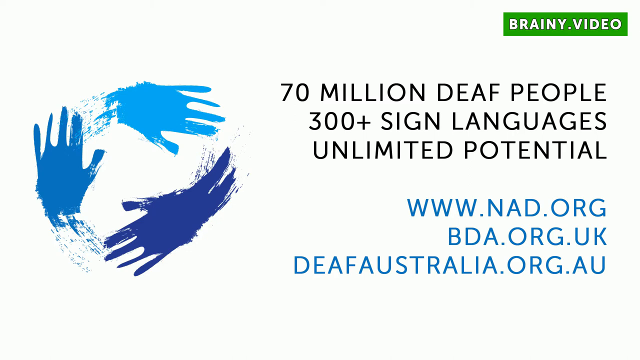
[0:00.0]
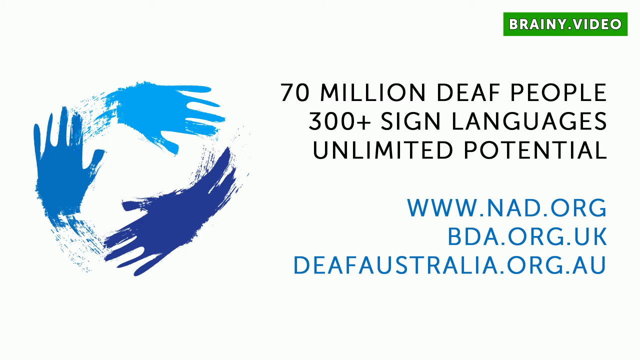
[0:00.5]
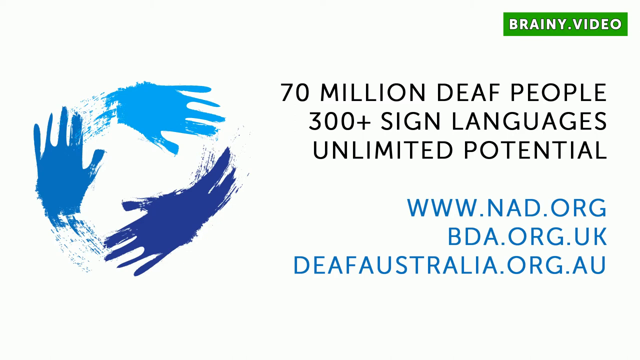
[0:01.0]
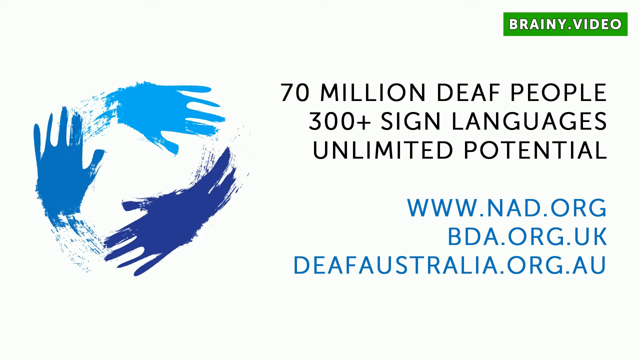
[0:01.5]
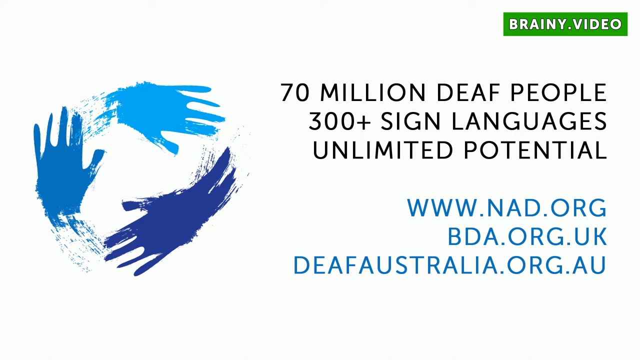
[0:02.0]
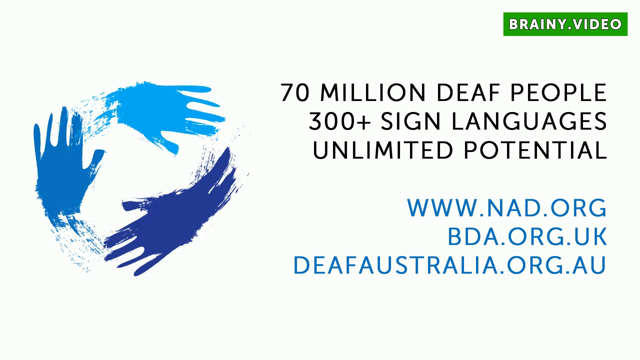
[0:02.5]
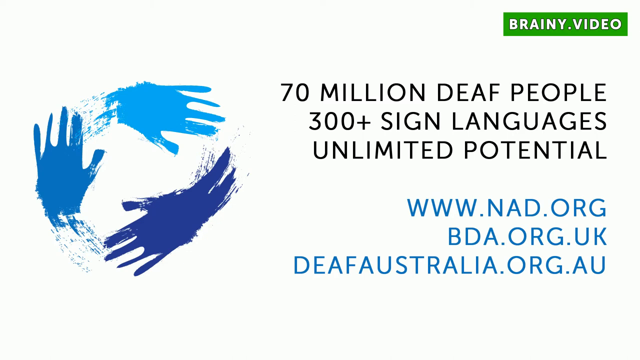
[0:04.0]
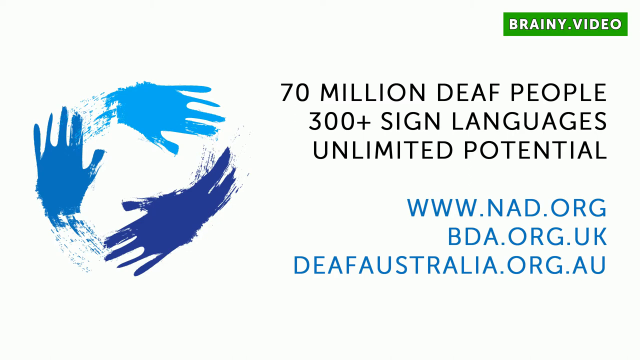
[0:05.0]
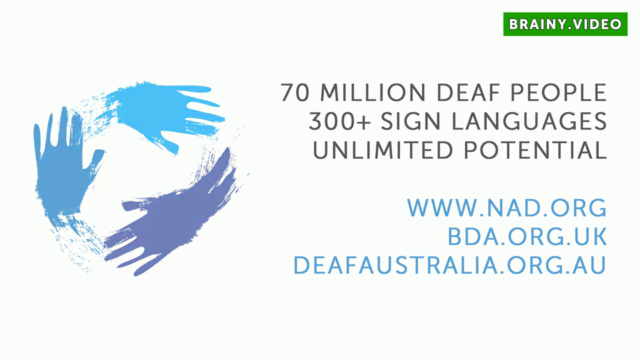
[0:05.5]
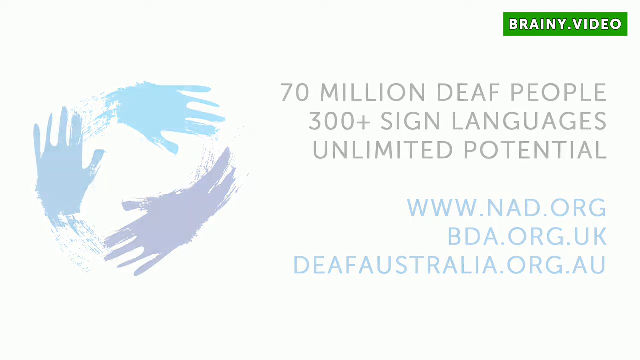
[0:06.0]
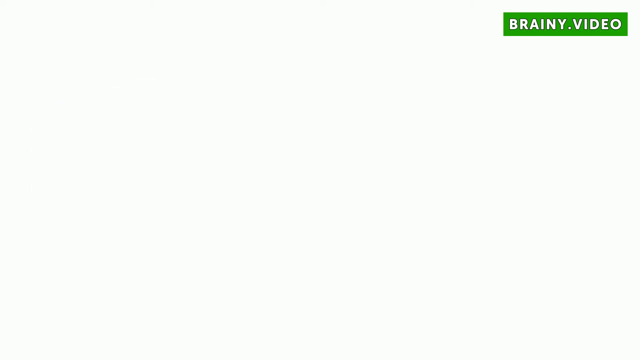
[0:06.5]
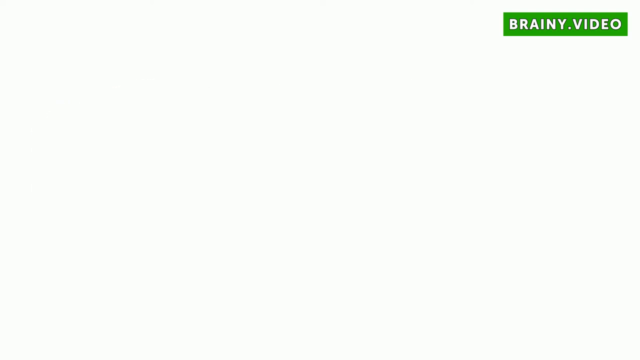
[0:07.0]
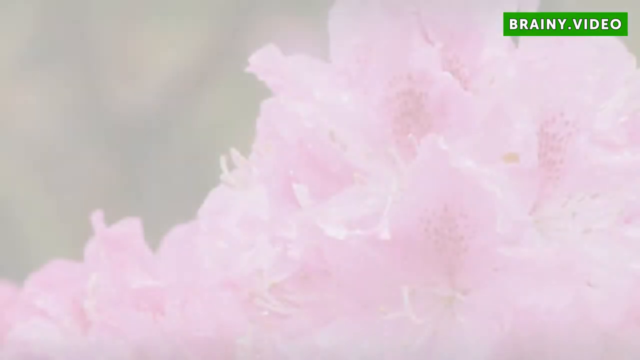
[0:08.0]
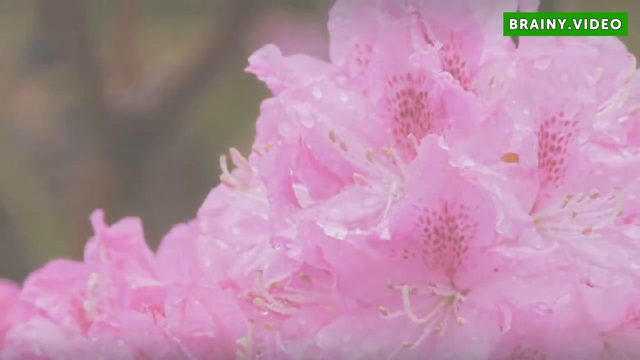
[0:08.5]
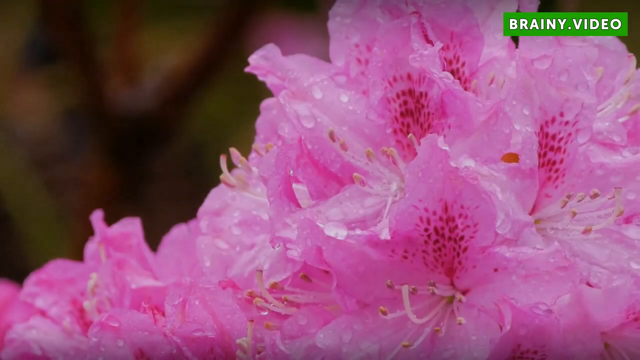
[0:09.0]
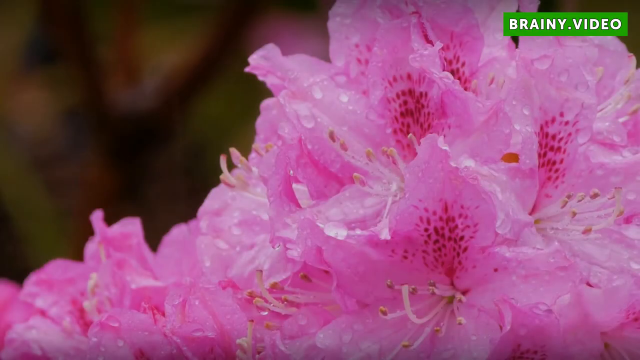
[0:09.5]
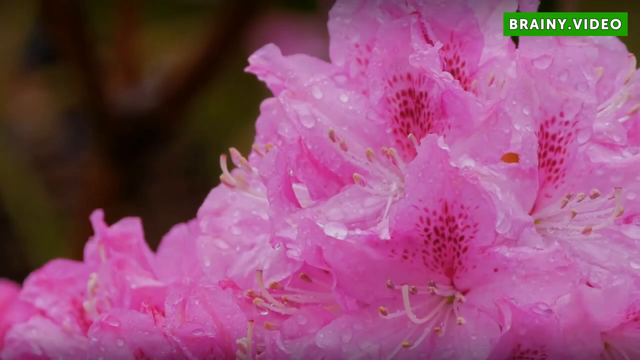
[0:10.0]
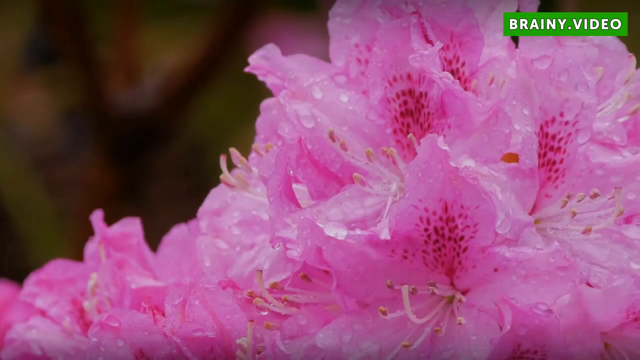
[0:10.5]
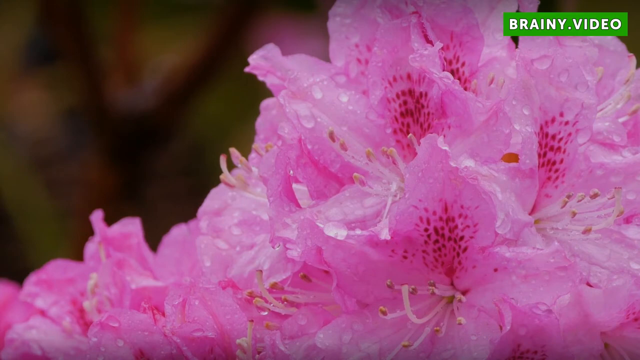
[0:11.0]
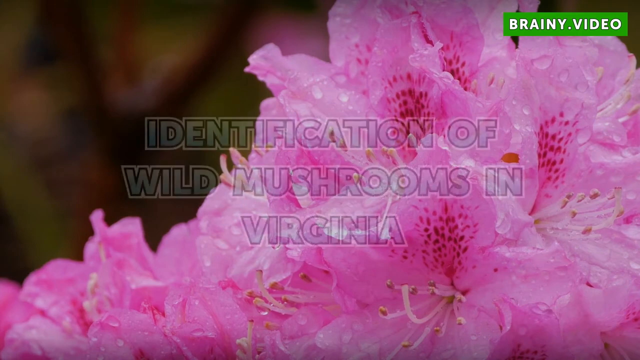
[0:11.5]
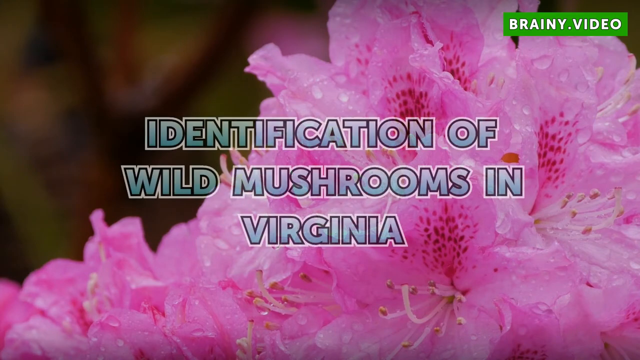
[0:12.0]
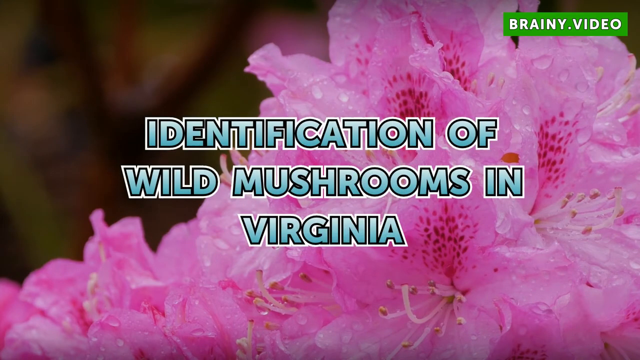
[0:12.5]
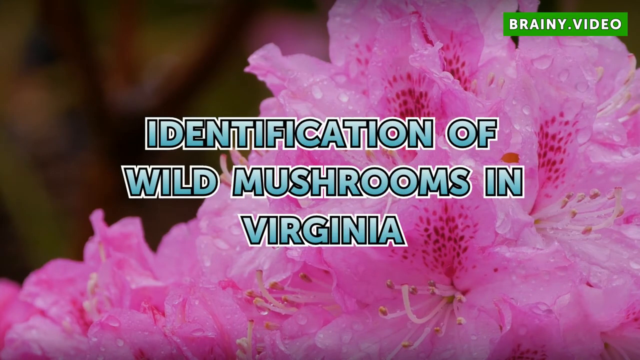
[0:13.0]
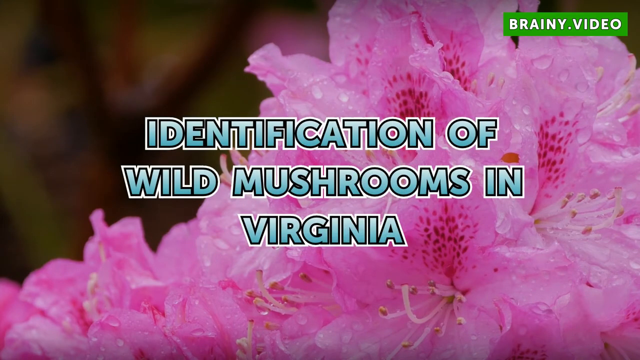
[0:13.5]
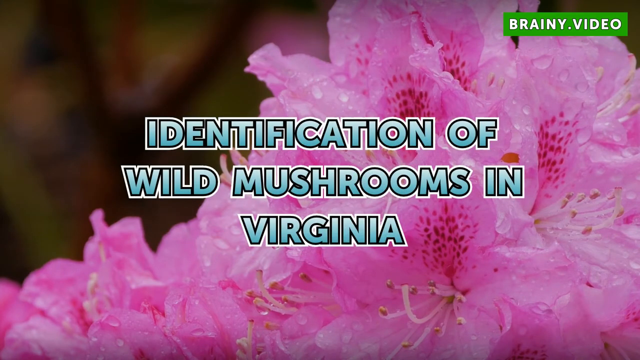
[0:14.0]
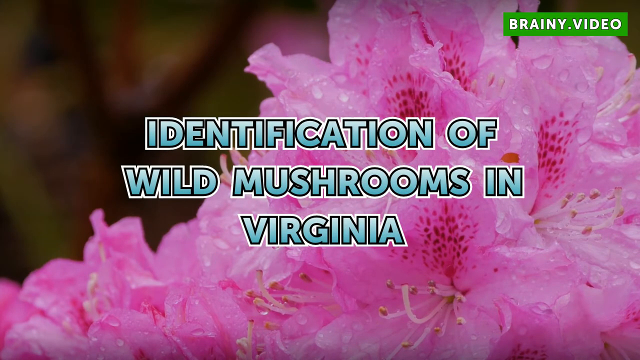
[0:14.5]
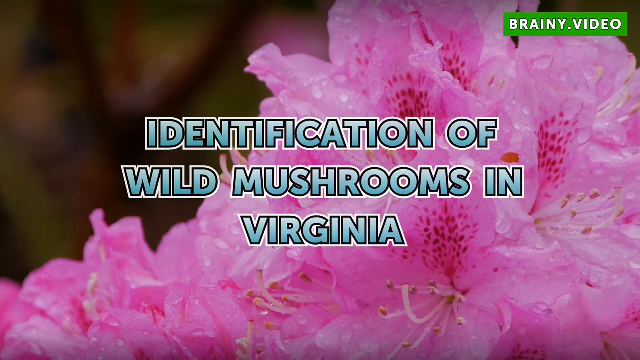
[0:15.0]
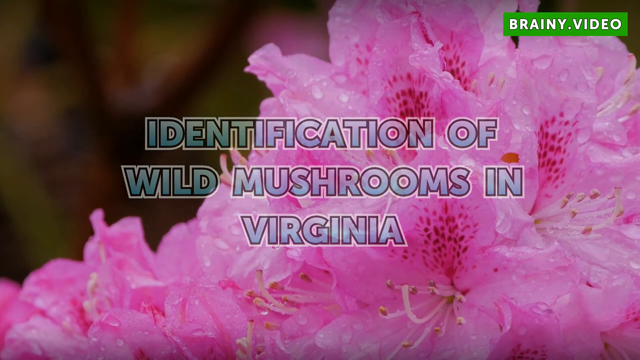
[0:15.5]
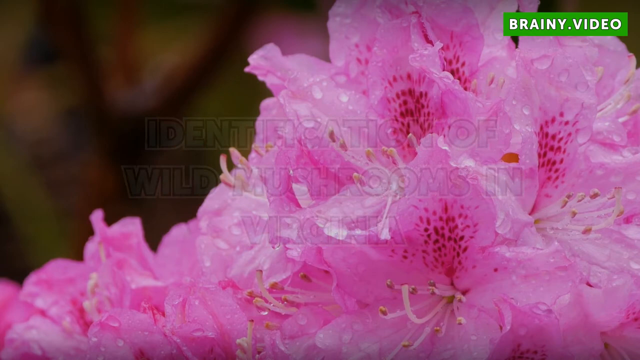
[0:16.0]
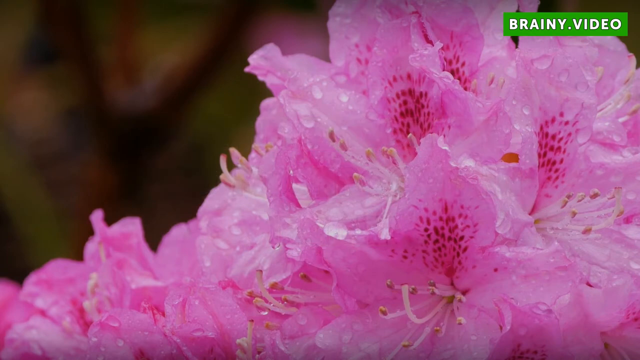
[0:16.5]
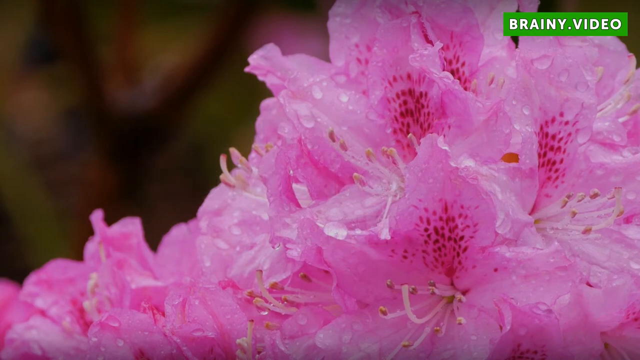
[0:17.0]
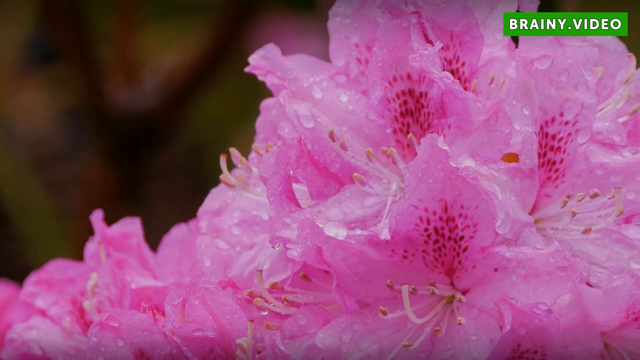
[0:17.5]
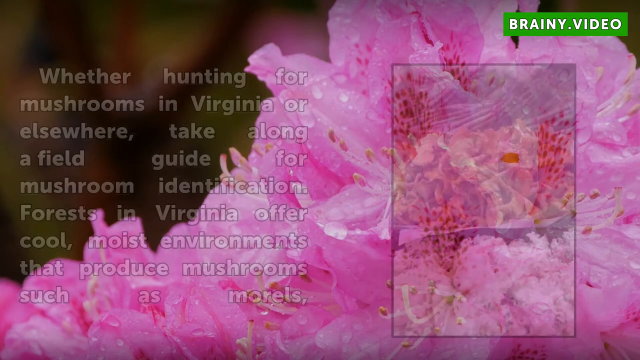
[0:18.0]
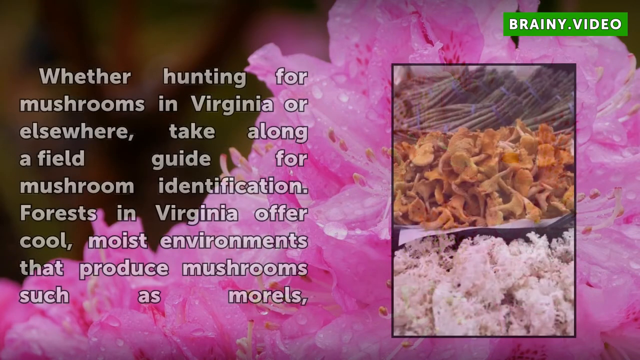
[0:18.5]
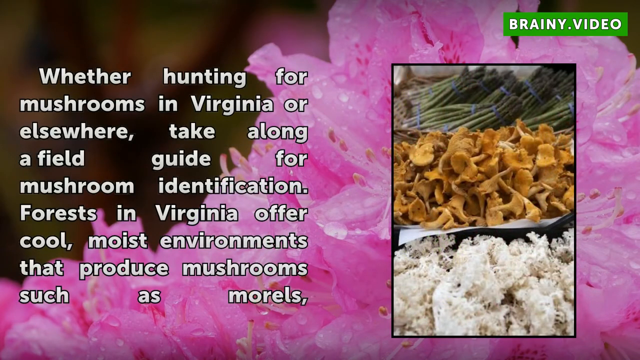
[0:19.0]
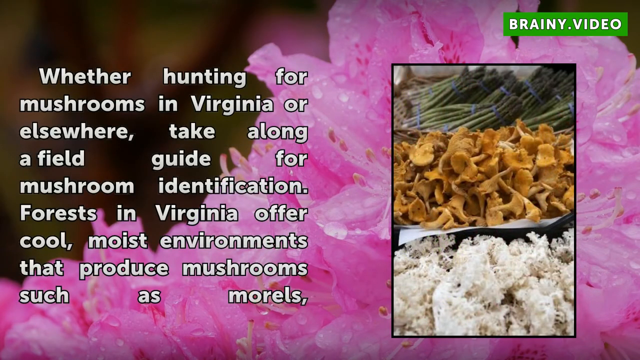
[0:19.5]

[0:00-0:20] The video opens with text on the screen, including "70 million deaf people, 300-plus sign languages, unlimited potential," followed by contact information for the website behind the message. In the upper right it says "brainy.video," and on the left is a logo of three hands in a circular pattern. Next, a pink flower appears, and words flash on the front of the screen: "identification of wild mushrooms in Virginia." A description follows: "whether hunting for mushrooms in Virginia or elsewhere, take along a field guide for mushroom identification," continuing with a line about a cool, moist environment that produces mushrooms "such as morels." An image appears to the right, showing mushrooms in the middle and apparently mushrooms in the lower part, while the upper part shows sticks of asparagus tied together with blue bands.